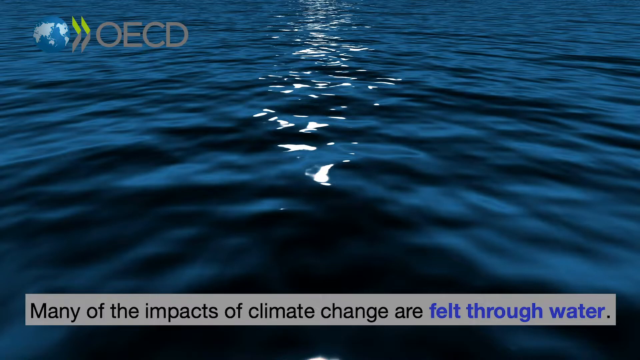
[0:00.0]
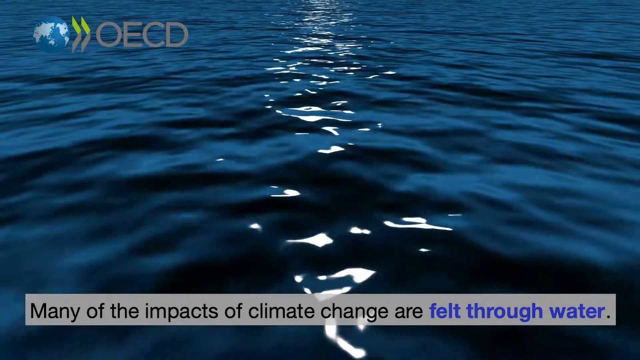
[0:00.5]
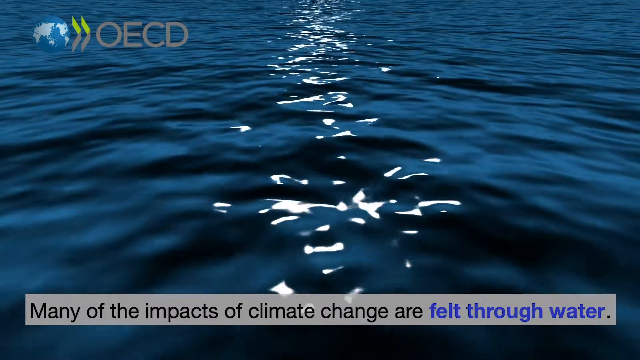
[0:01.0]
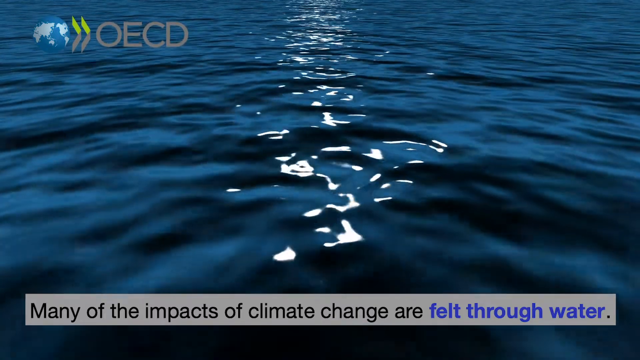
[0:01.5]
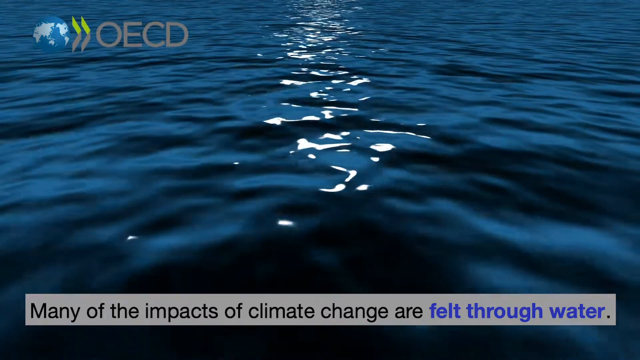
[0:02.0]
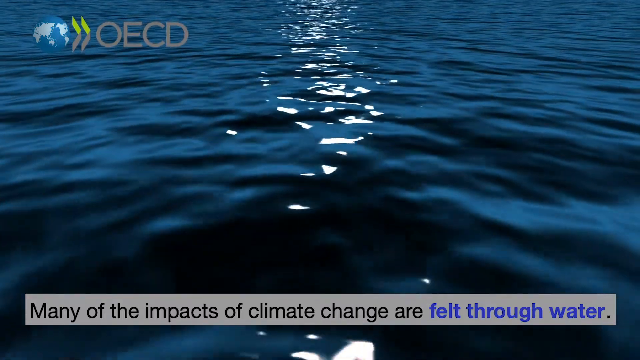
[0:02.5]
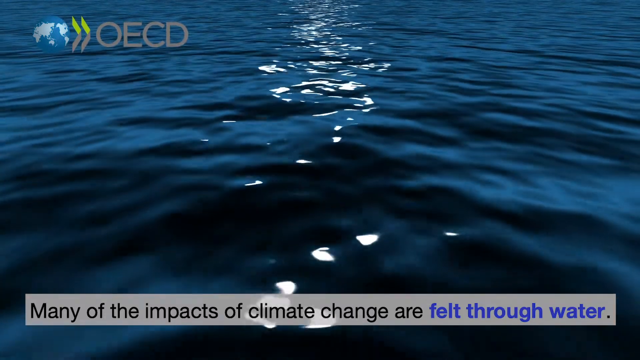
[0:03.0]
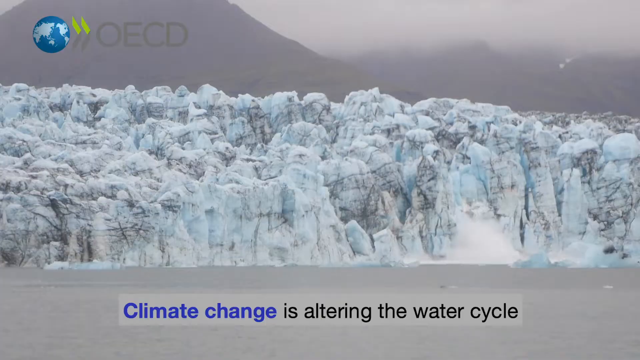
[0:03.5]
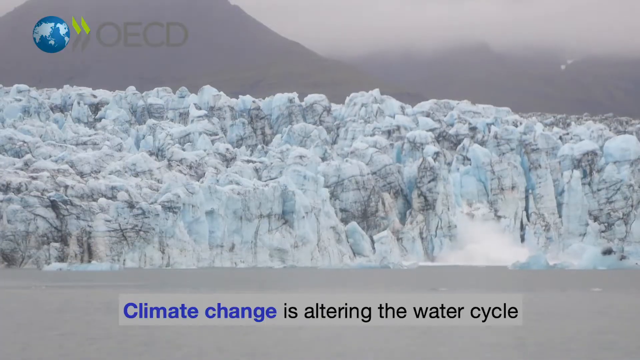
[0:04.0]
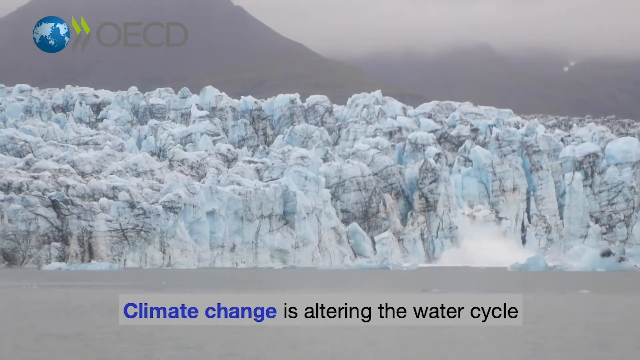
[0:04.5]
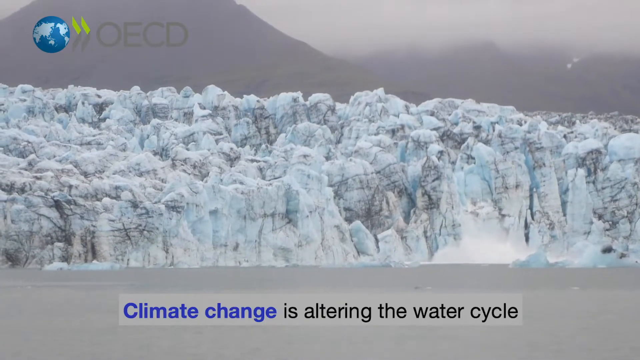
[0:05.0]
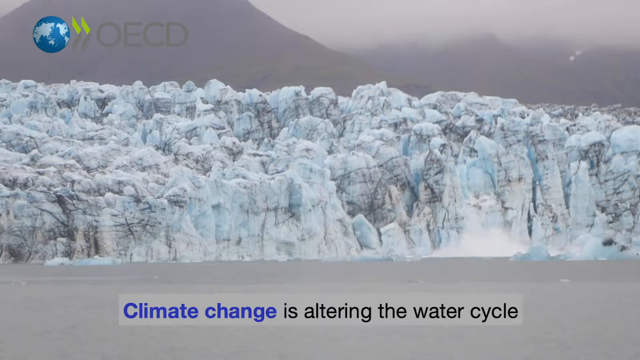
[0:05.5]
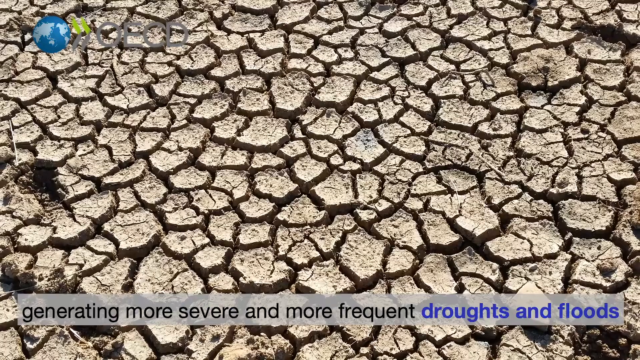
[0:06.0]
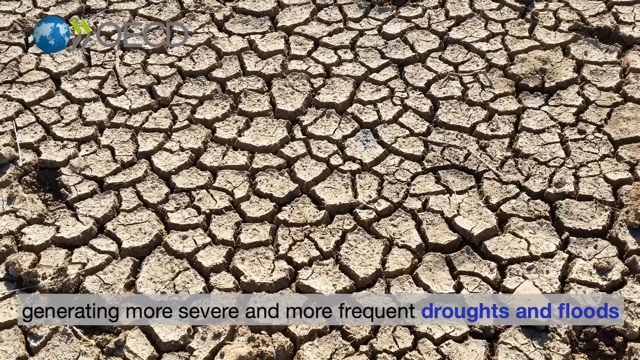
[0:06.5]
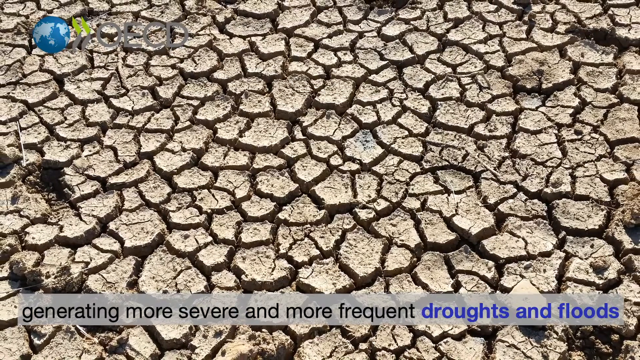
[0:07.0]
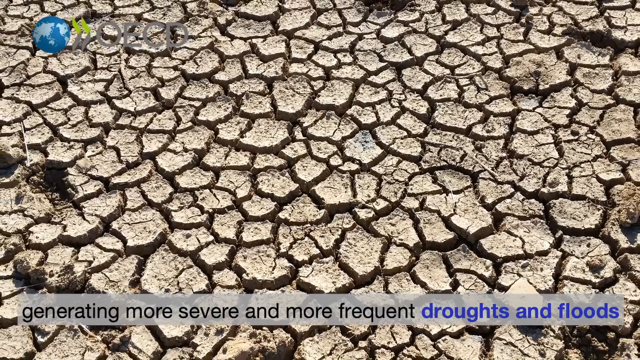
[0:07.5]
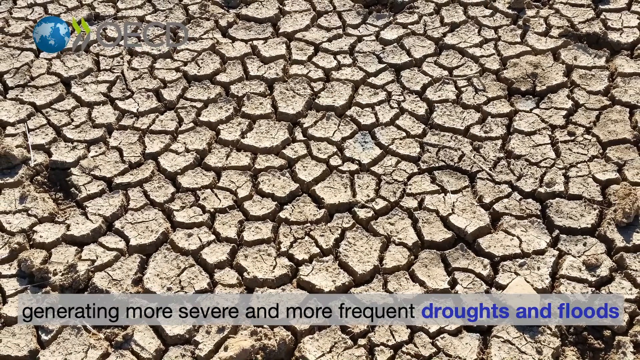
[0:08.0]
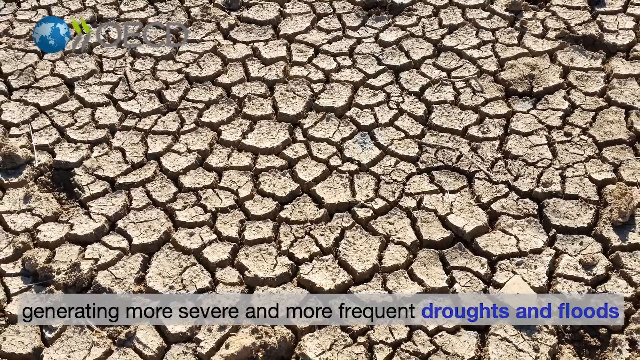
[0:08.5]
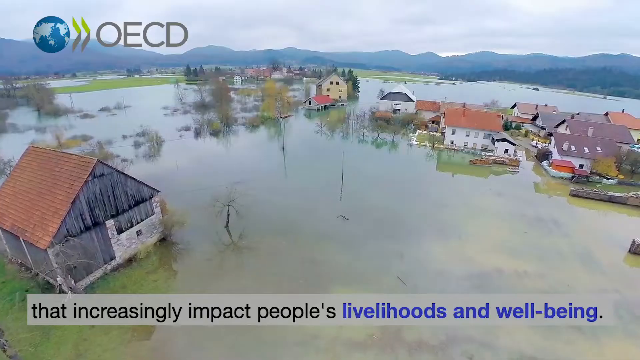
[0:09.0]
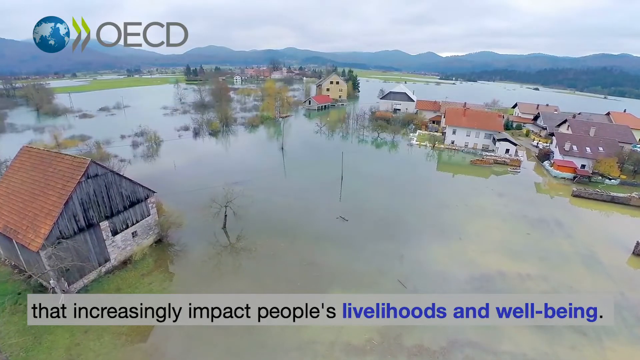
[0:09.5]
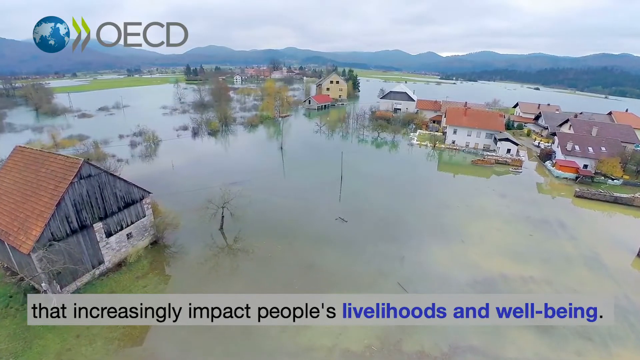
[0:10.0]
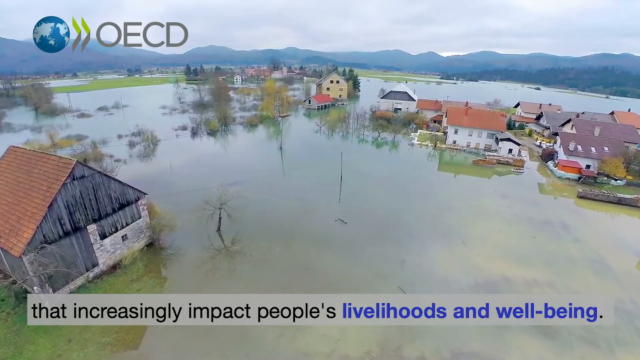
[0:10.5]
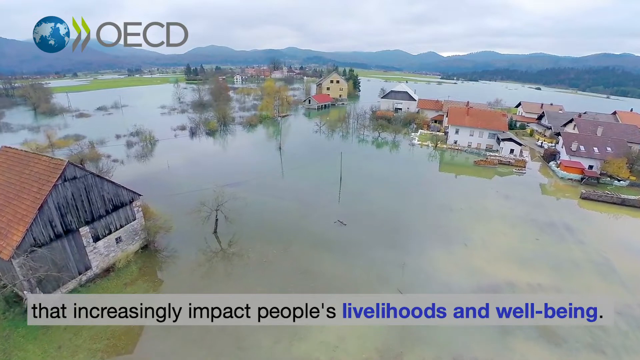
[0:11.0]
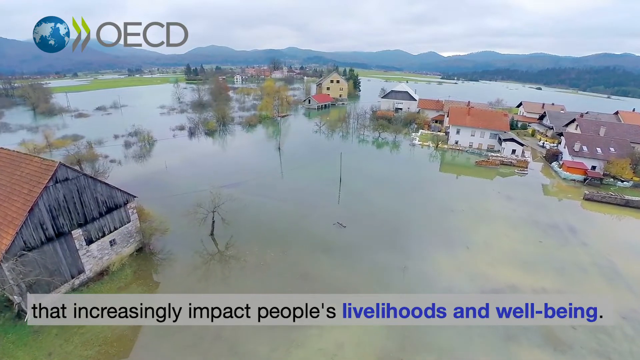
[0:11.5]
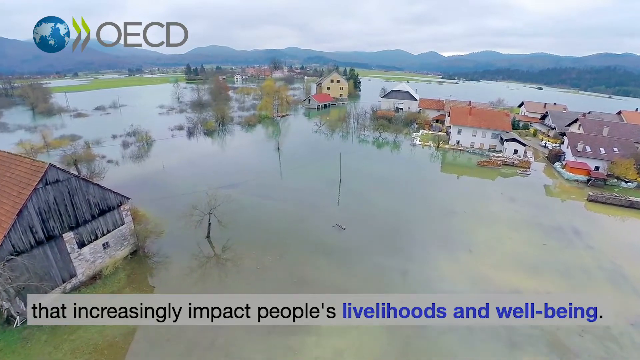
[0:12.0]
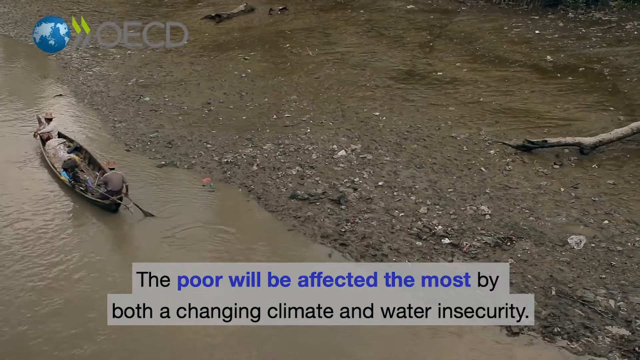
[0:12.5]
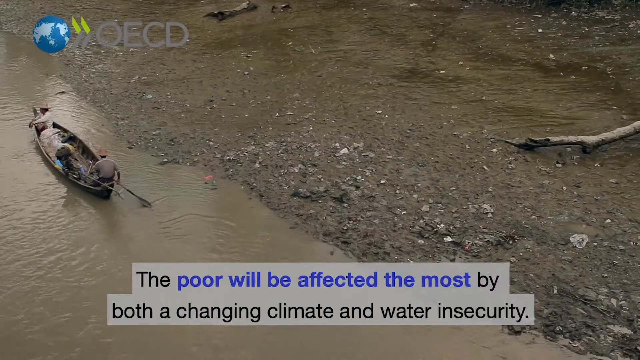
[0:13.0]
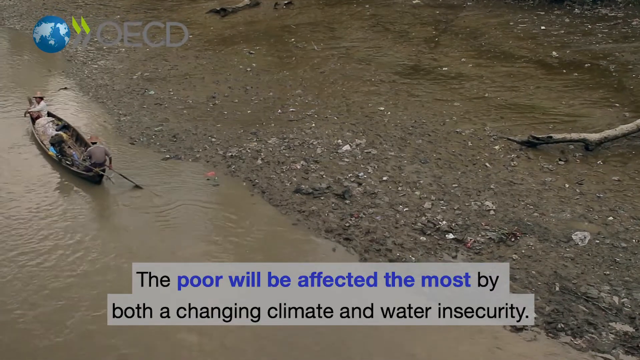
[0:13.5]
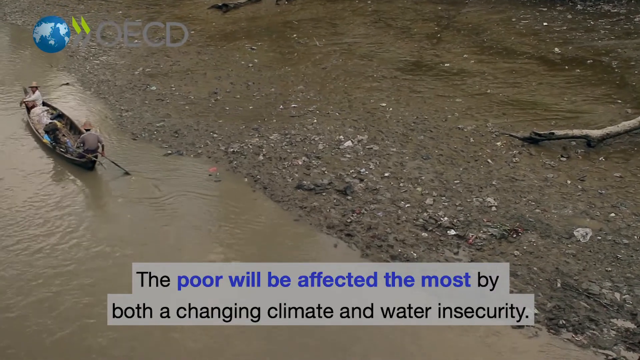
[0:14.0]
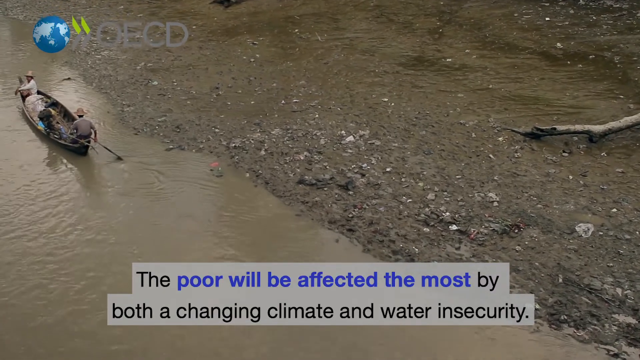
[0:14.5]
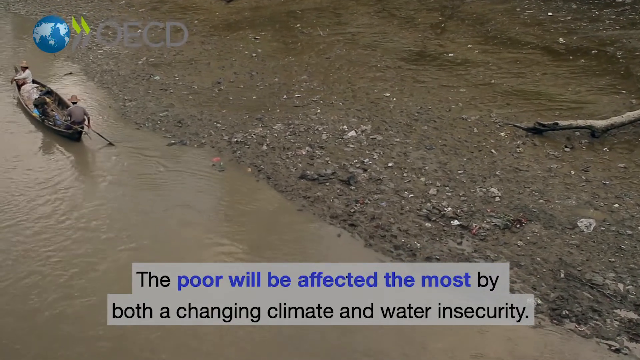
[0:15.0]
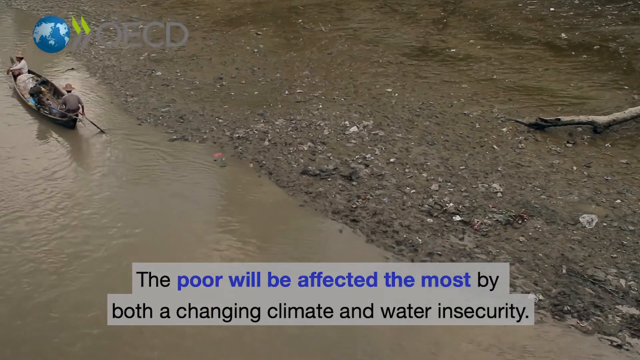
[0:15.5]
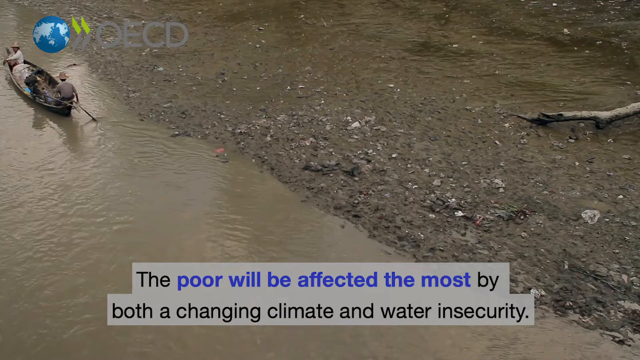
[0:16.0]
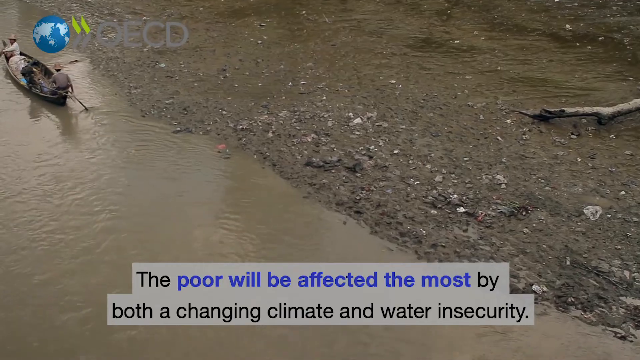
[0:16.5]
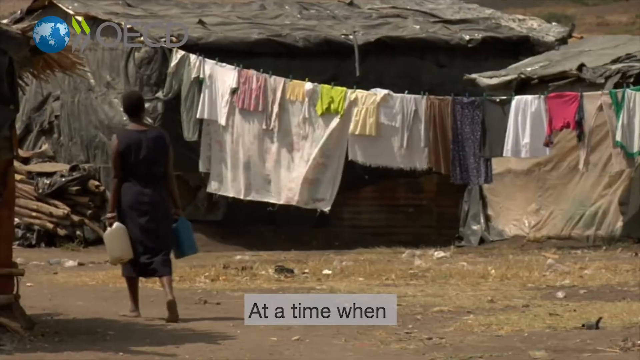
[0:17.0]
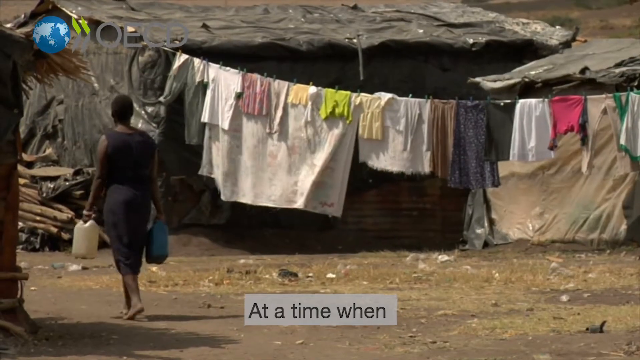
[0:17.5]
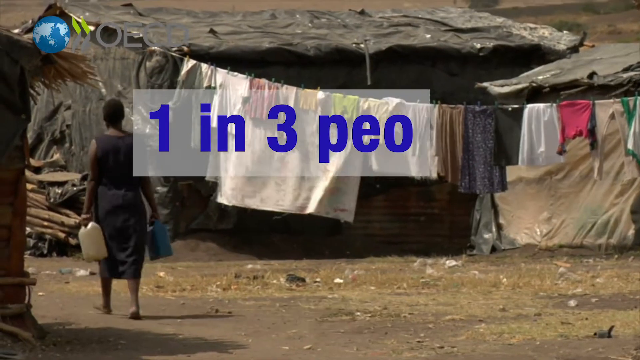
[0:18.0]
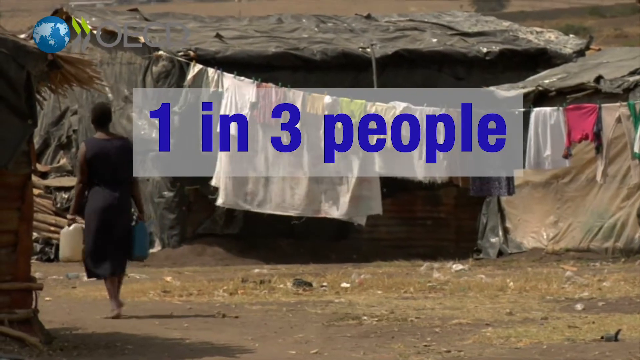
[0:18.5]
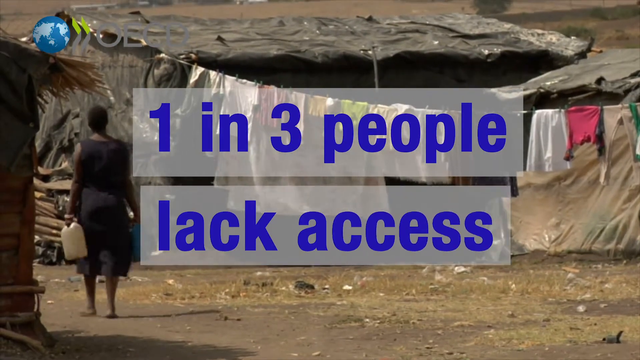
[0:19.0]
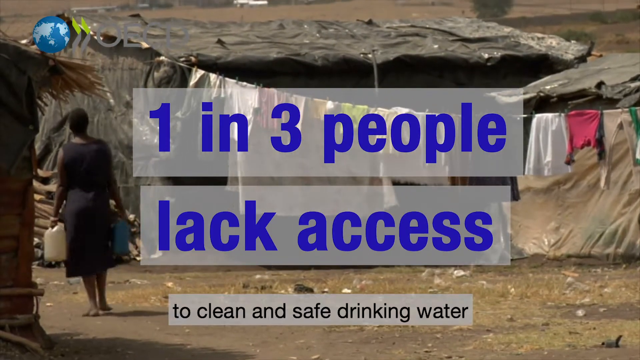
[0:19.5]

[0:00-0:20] Ripples move across the ocean while text mentions that many of the impacts of climate change are felt through water; in the top left-hand corner, "OECD" appears with a map of the world. The screen transitions to large icebergs, with text underneath reading "climate change is altering the water cycle." Next comes dried earth, soil completely dried out, as text mentions that it is generating more severe and more frequent droughts and floods. The video then transitions to flooded homes: a number of large two- or three-storey buildings, all flooded, with all of the surrounding ground completely under water. Text mentions that climate change will increasingly impact people's livelihoods and well-being, and that the poor will be affected the most by both a changing climate and water insecurity.